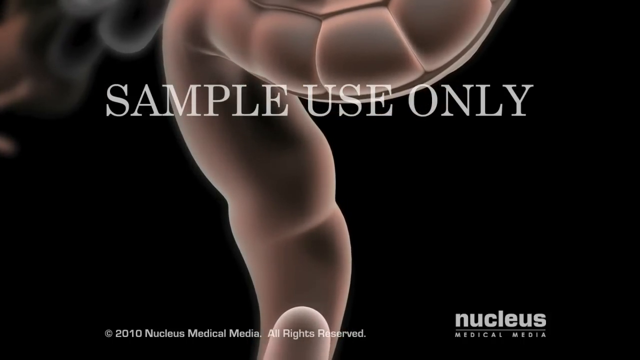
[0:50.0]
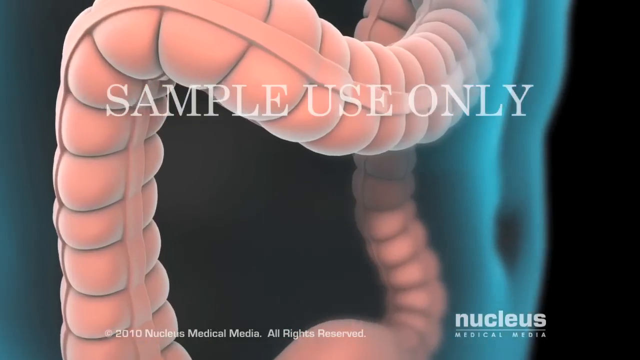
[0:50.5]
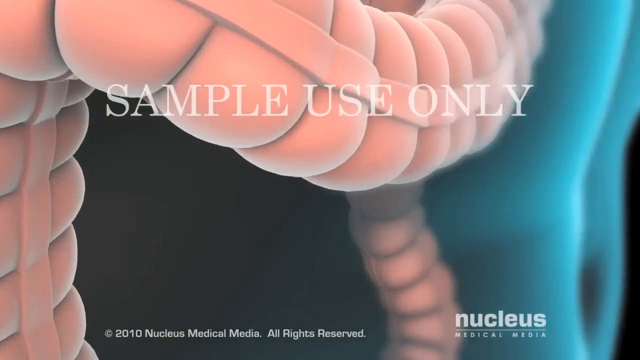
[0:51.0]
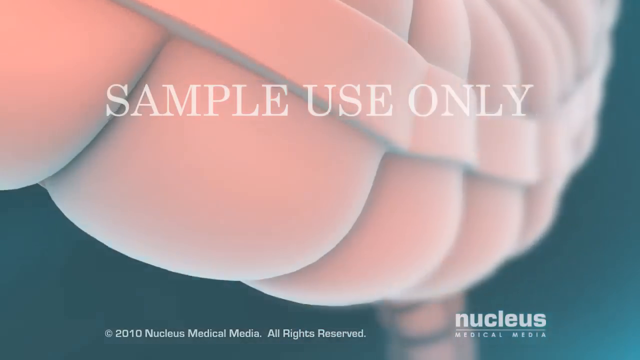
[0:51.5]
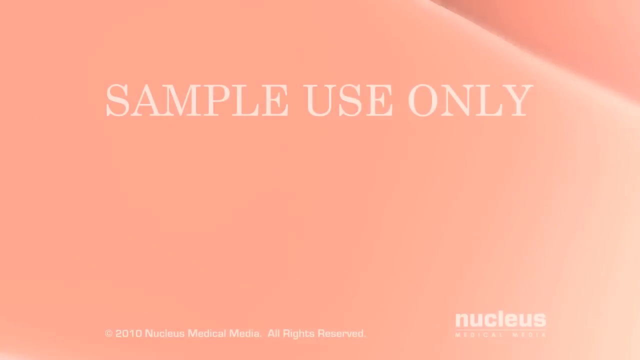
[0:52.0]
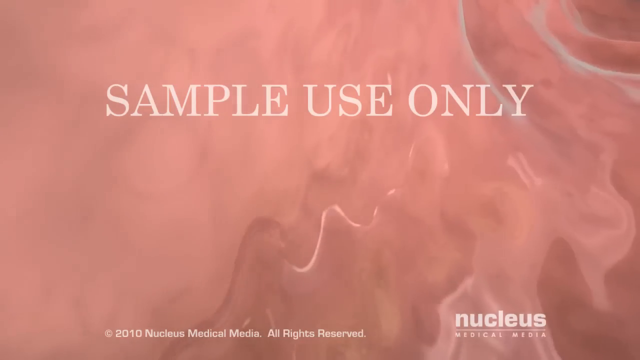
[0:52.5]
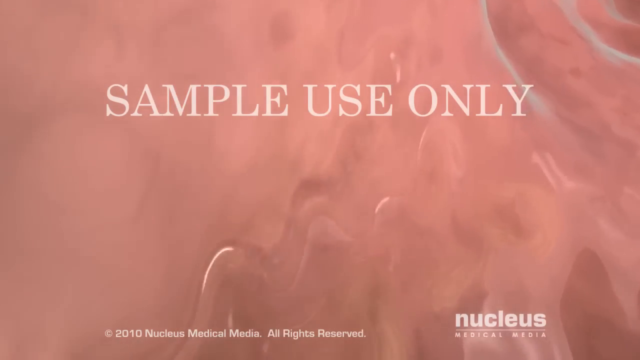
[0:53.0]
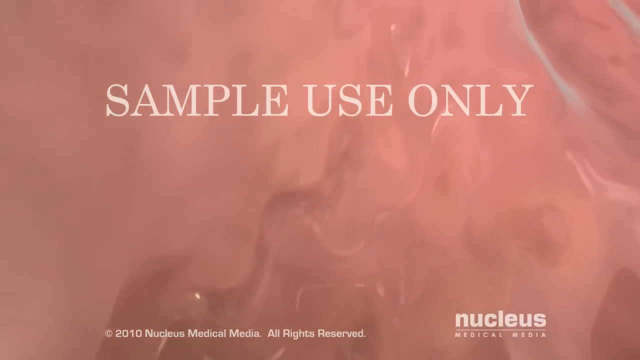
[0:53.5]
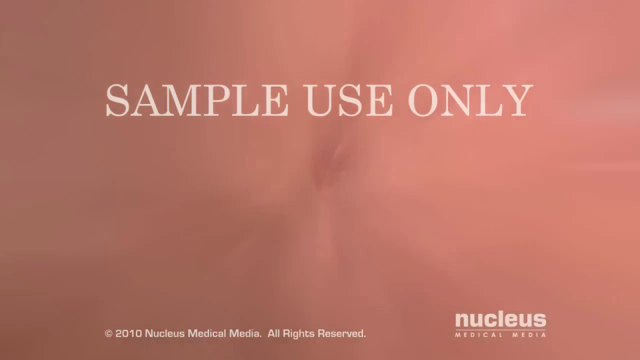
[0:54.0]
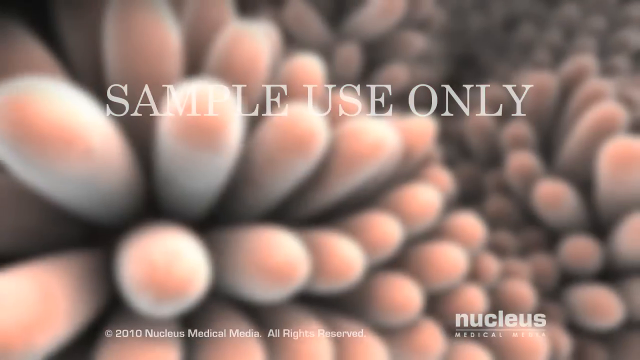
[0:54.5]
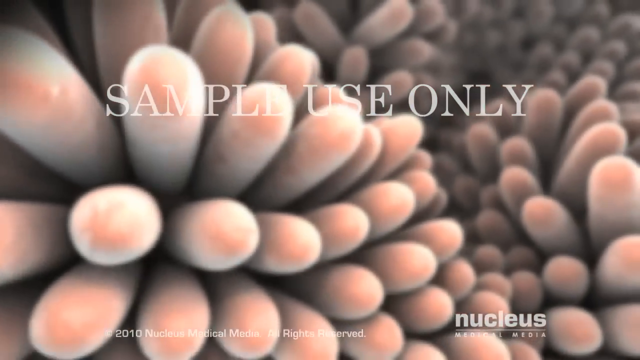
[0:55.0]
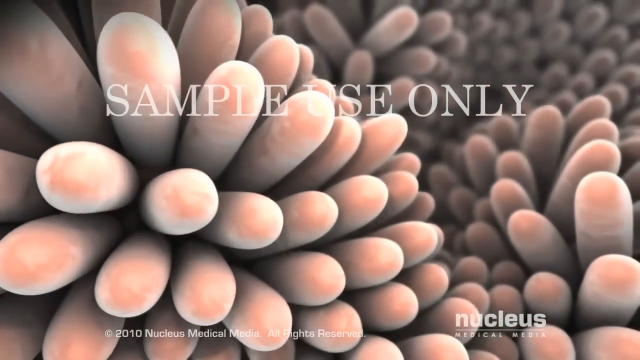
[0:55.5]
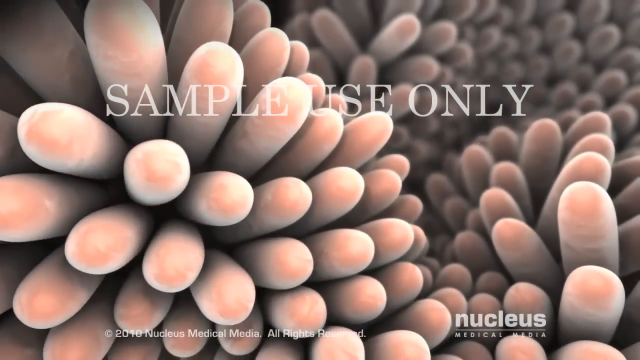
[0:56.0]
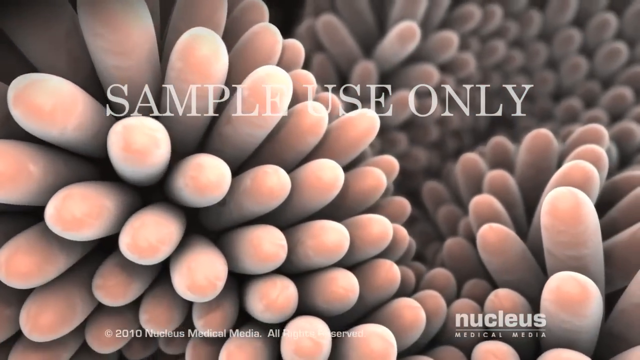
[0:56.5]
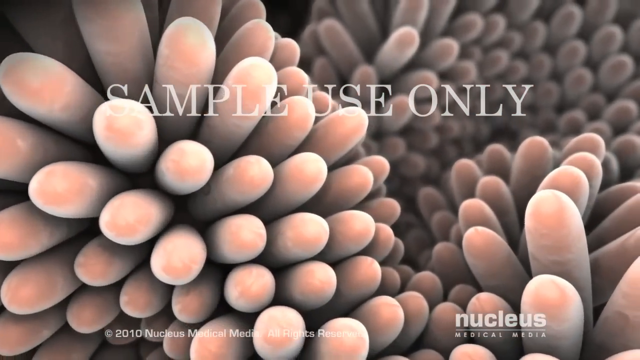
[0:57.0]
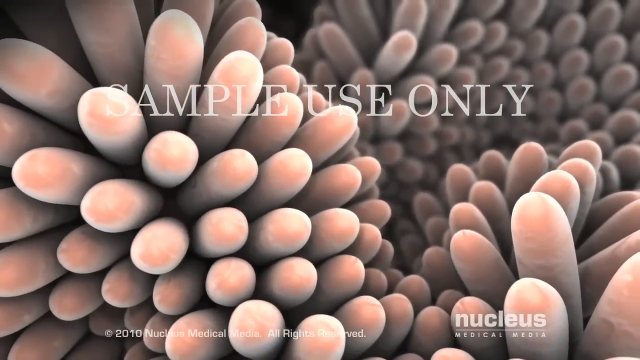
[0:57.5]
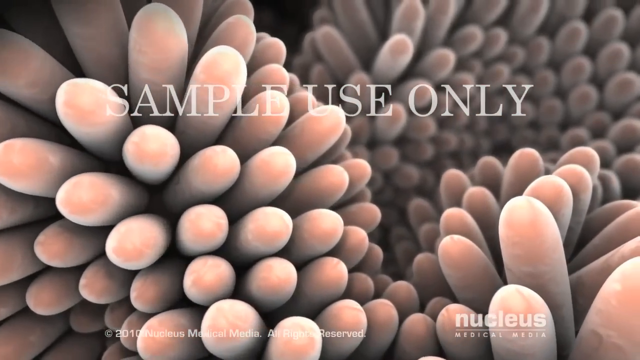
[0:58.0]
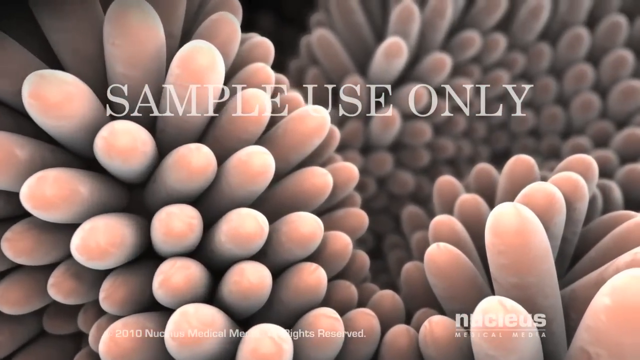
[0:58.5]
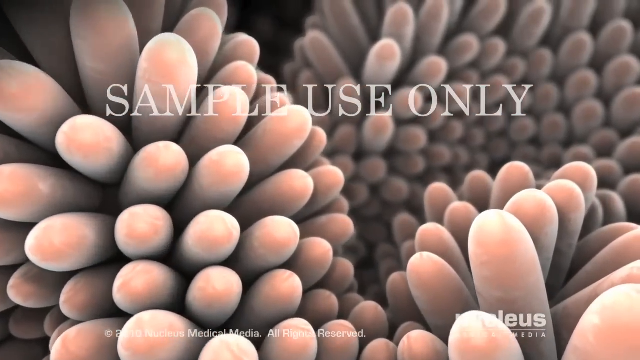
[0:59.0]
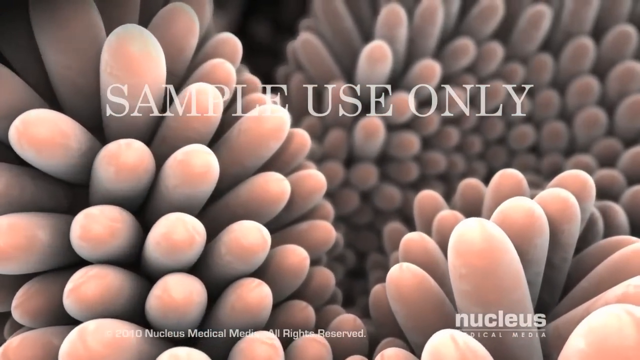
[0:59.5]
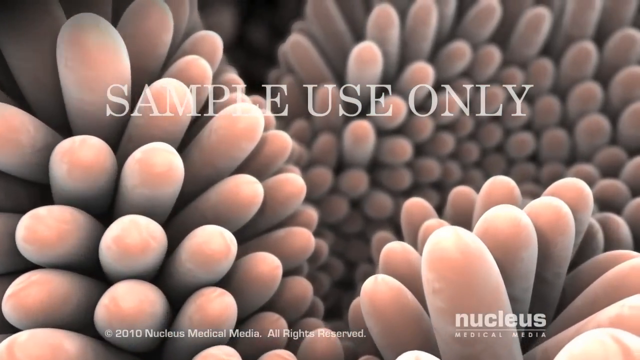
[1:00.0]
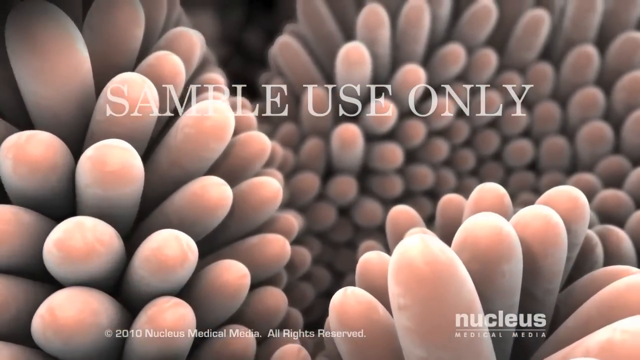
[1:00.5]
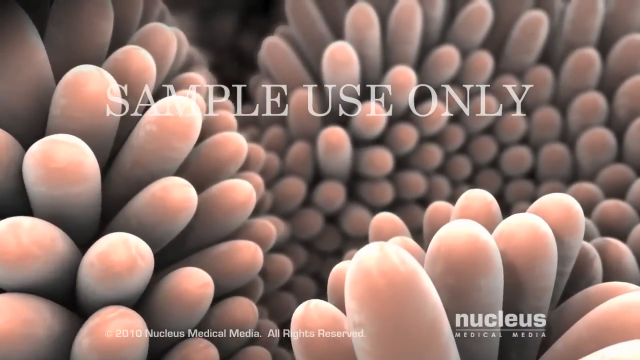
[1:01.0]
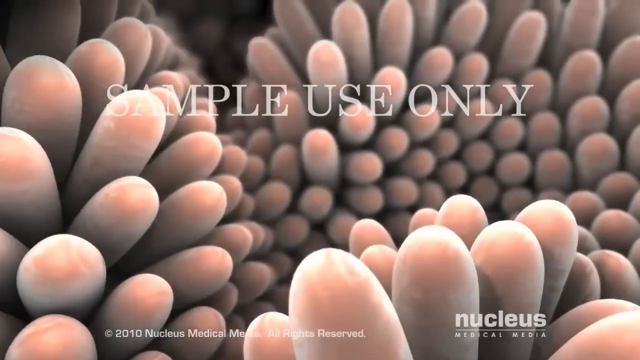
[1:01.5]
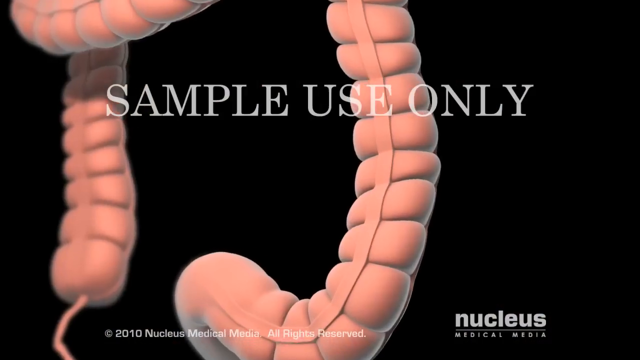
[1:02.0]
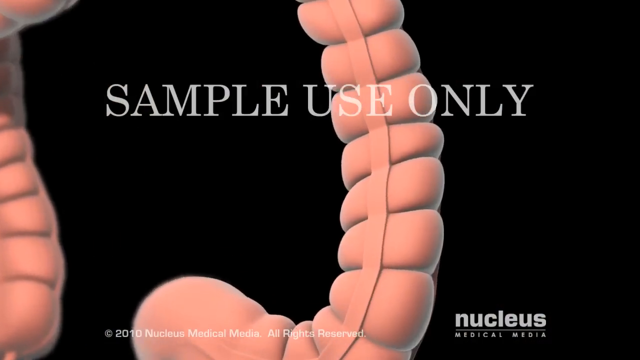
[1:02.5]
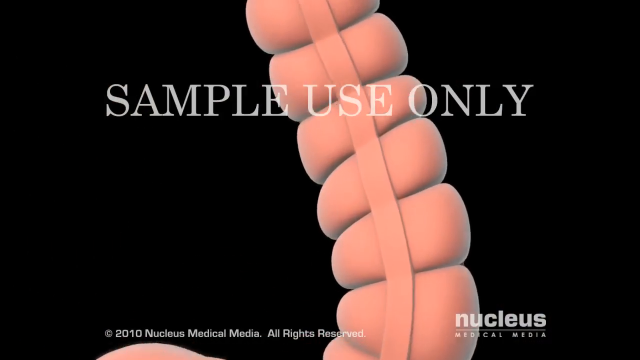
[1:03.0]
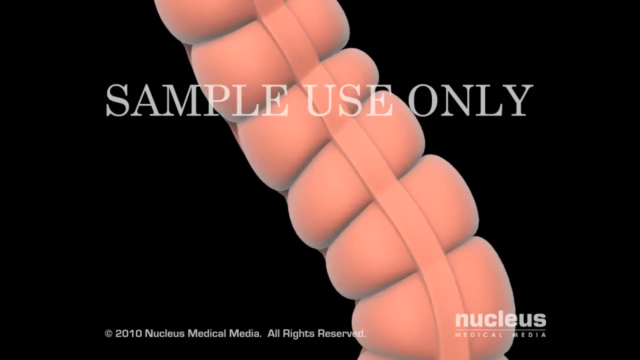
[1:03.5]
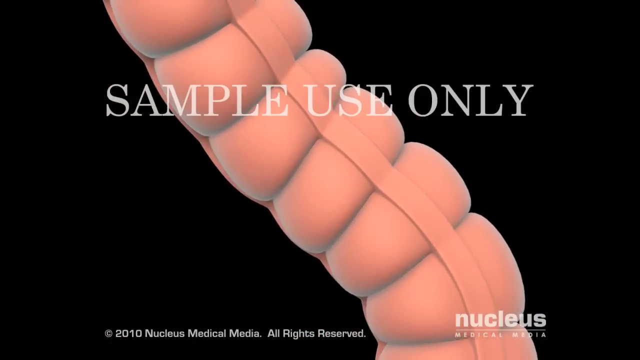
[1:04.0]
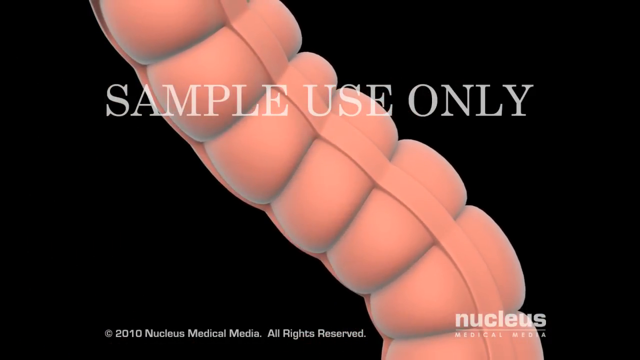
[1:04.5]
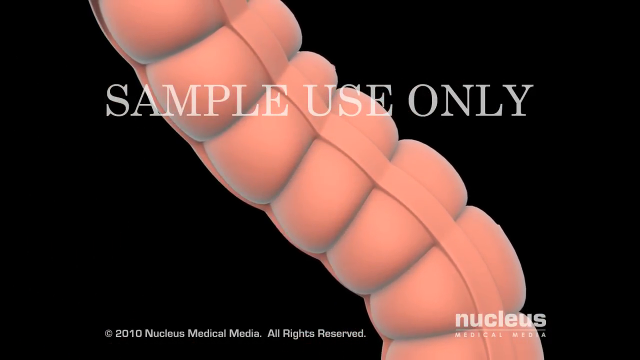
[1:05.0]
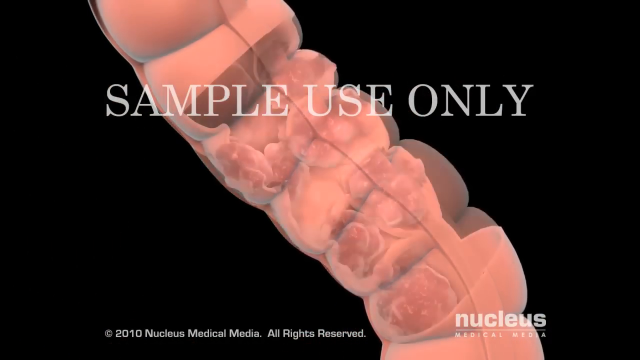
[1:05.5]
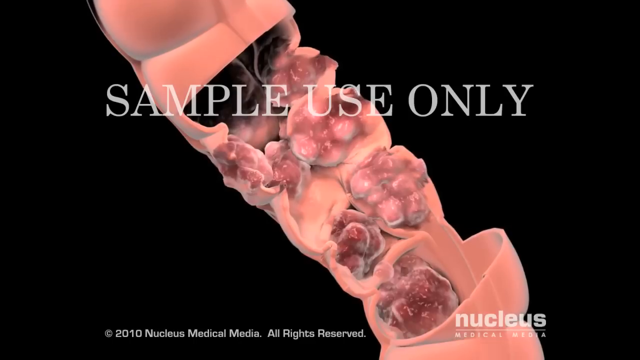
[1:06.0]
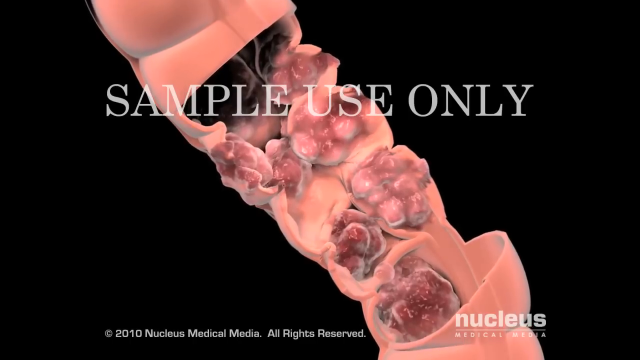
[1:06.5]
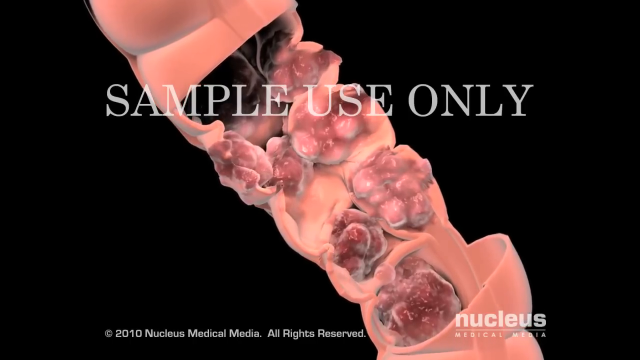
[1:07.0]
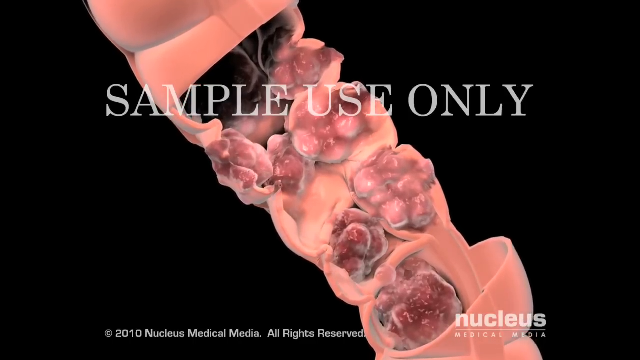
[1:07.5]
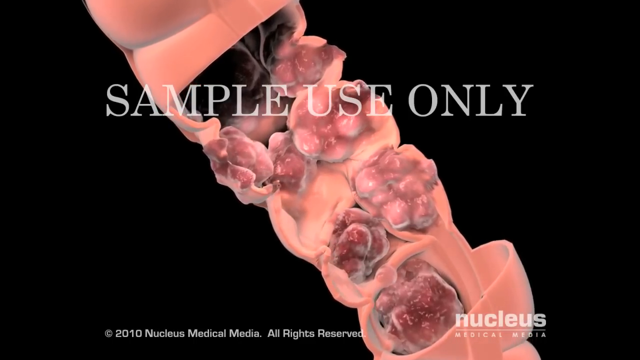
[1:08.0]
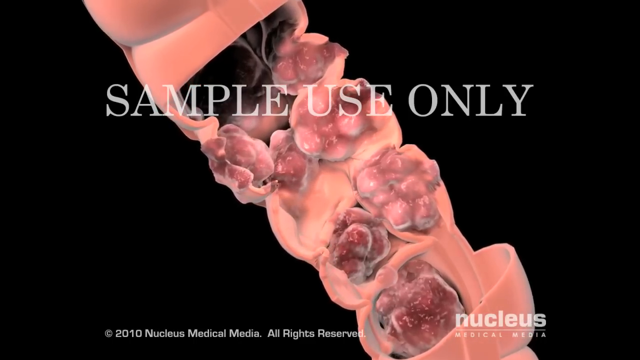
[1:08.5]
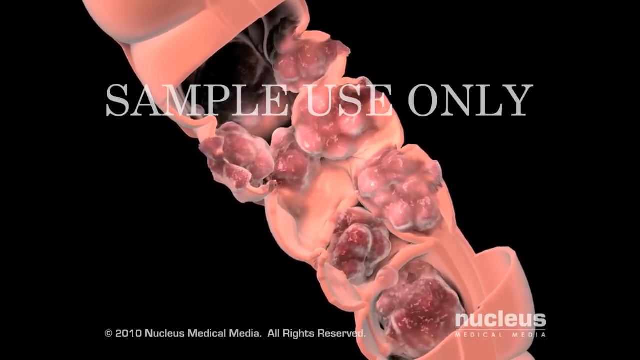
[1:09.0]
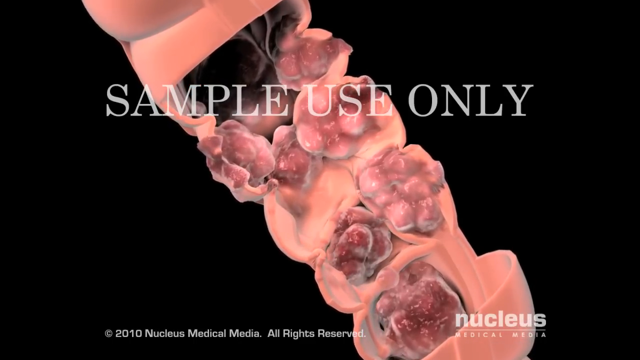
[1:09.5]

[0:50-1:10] "Sample use only" appears in capital letters across the screen. A model of an intestine has many little prongs inside it, shown up close. The outside of the intestine is shown along its length. Then the top portion is taken off, revealing round objects inside; only a very small portion of the intestine is removed. The entire digestive system is shown, and then the view concentrates on this one intestine and what is inside. The intestine is a pinkish color set on a very dark black background. Its sections are bound together to create a hose-like view.